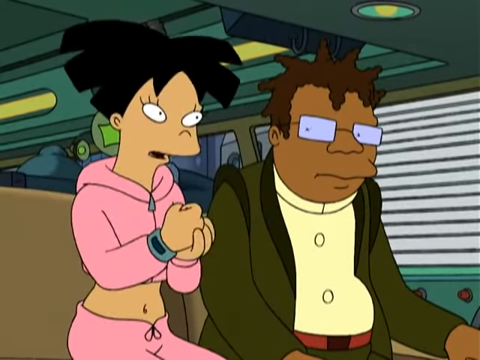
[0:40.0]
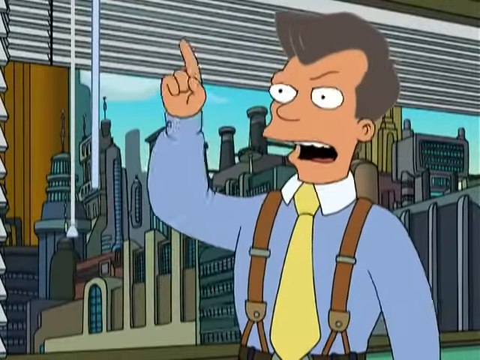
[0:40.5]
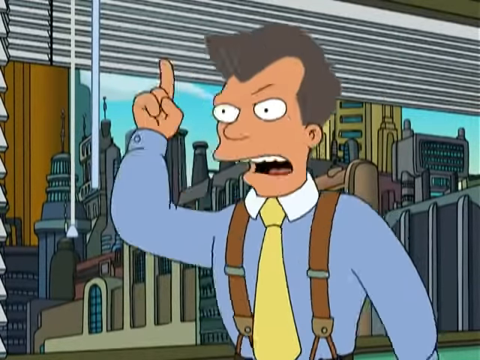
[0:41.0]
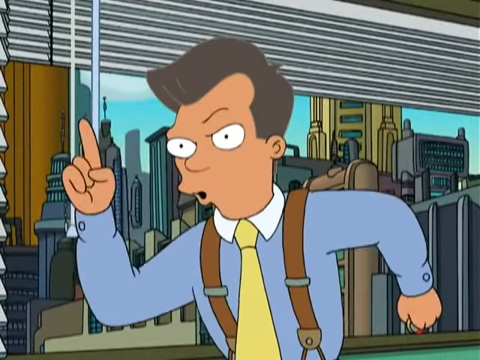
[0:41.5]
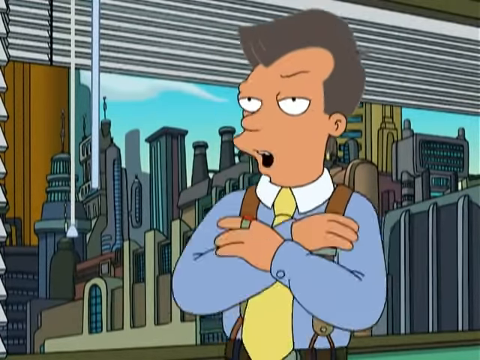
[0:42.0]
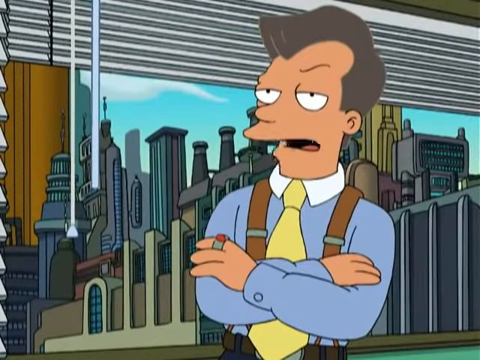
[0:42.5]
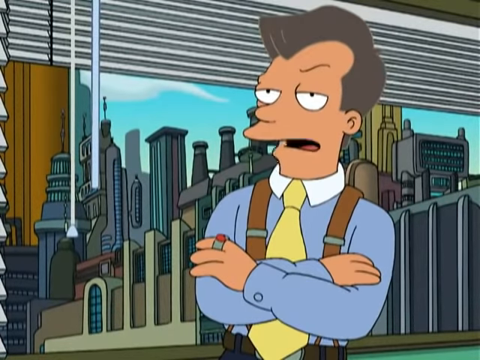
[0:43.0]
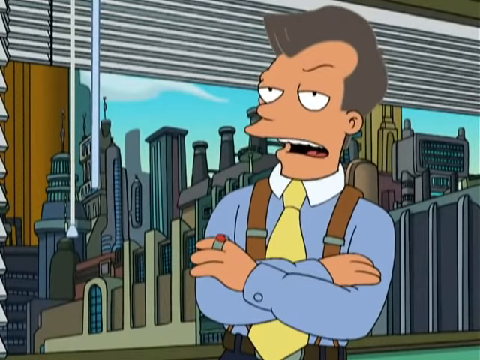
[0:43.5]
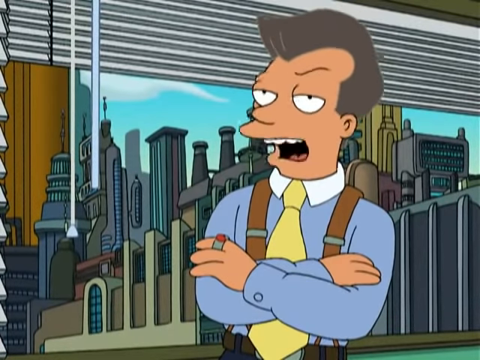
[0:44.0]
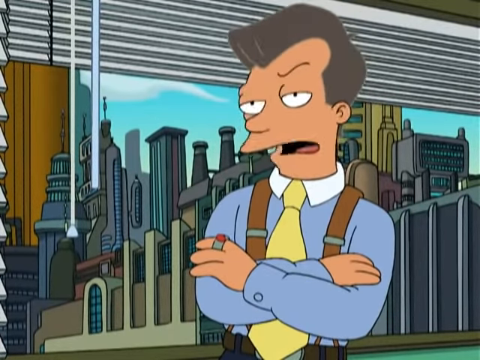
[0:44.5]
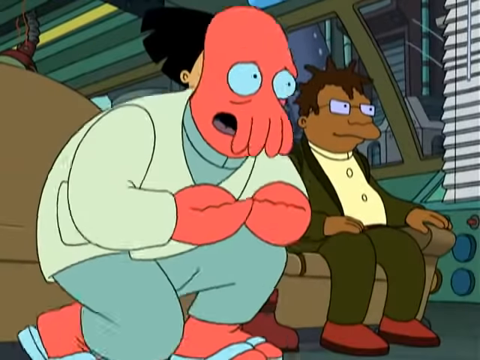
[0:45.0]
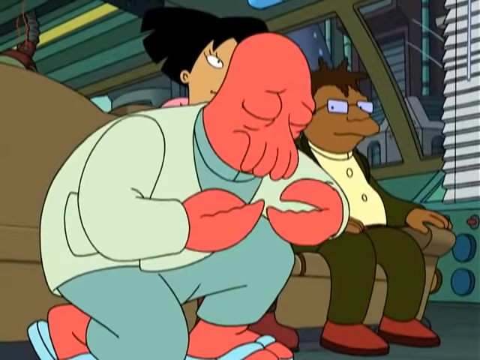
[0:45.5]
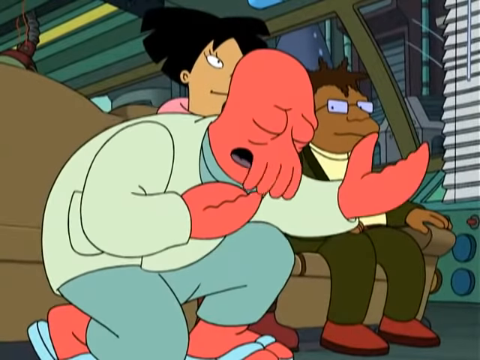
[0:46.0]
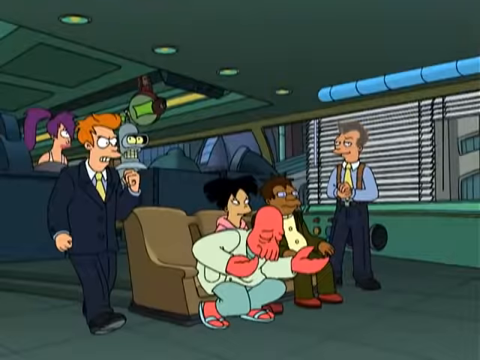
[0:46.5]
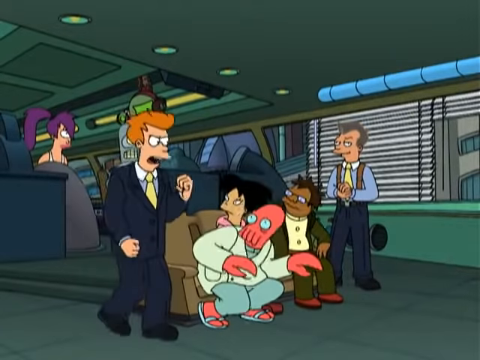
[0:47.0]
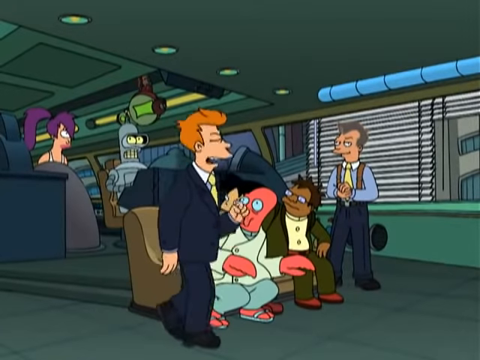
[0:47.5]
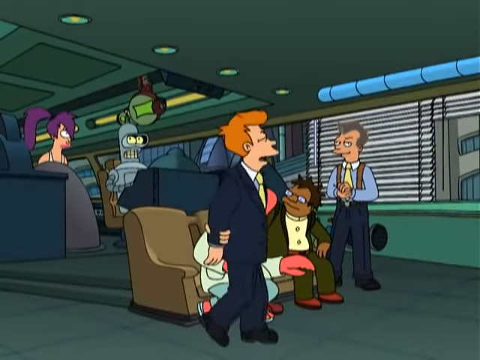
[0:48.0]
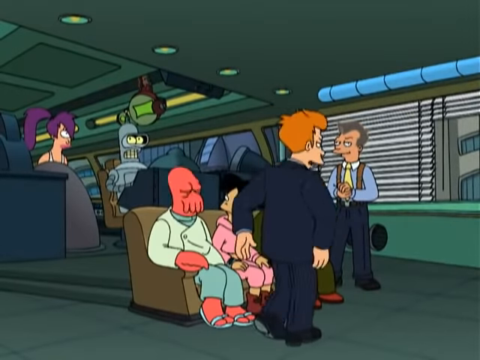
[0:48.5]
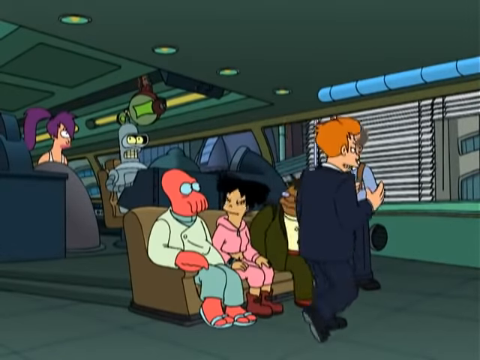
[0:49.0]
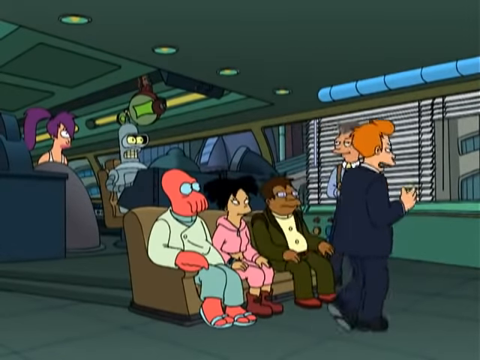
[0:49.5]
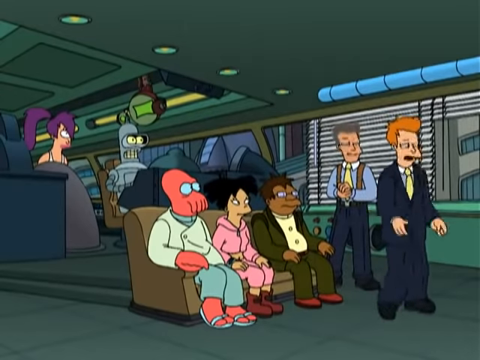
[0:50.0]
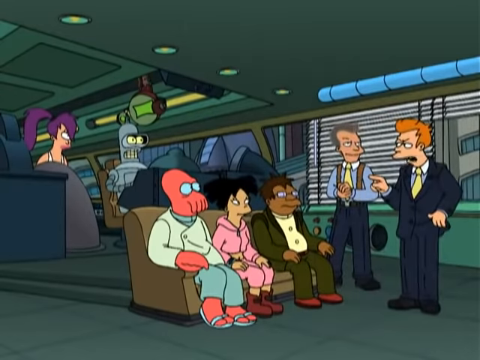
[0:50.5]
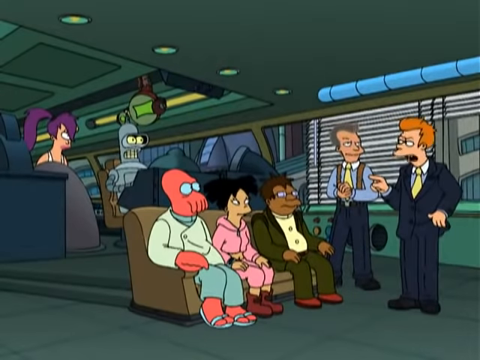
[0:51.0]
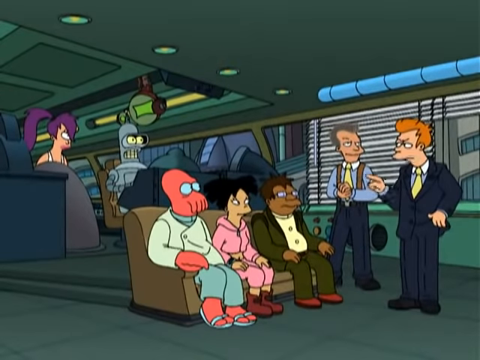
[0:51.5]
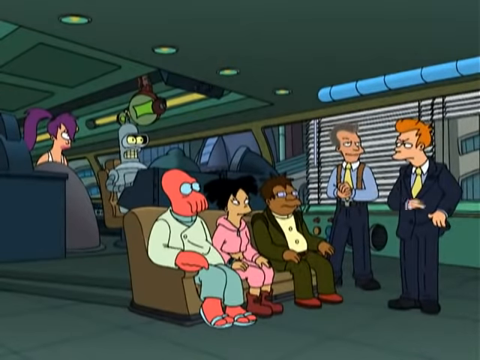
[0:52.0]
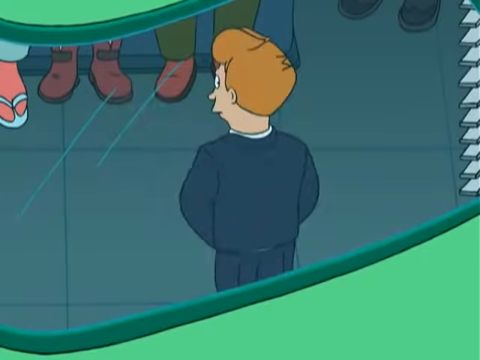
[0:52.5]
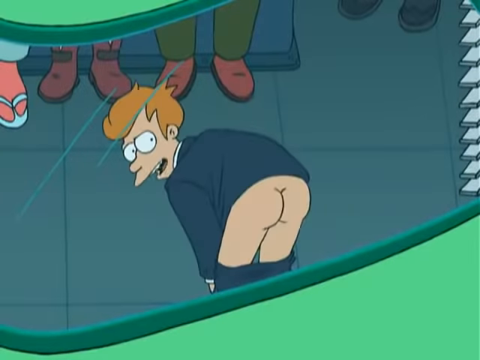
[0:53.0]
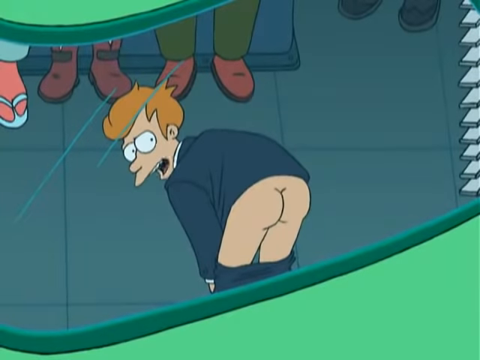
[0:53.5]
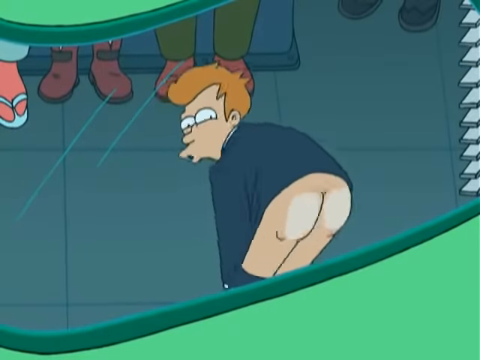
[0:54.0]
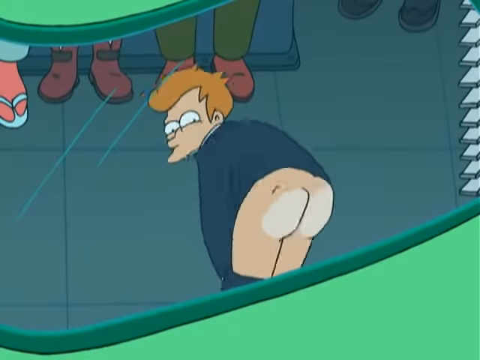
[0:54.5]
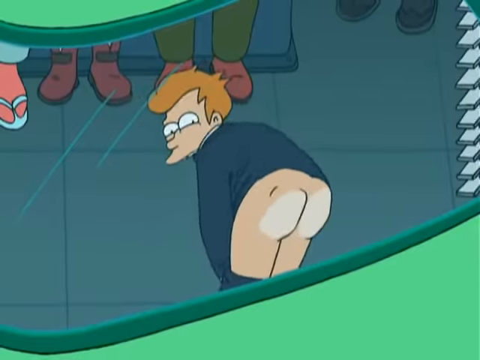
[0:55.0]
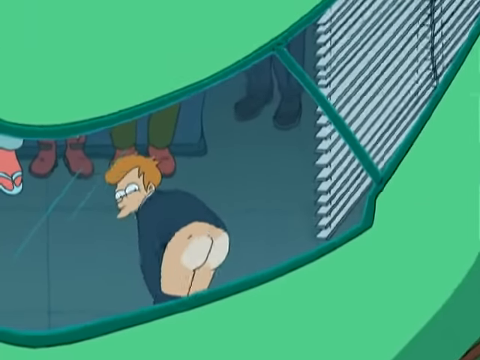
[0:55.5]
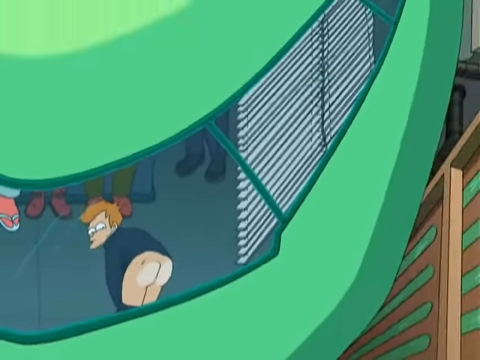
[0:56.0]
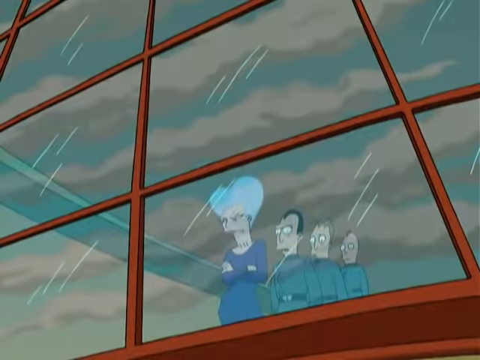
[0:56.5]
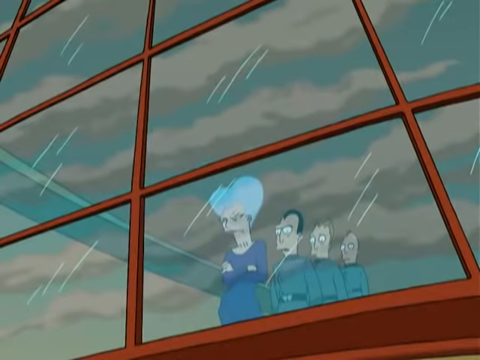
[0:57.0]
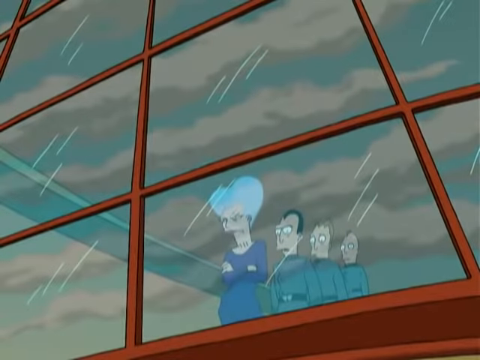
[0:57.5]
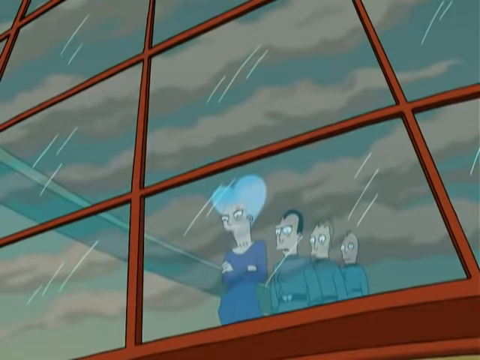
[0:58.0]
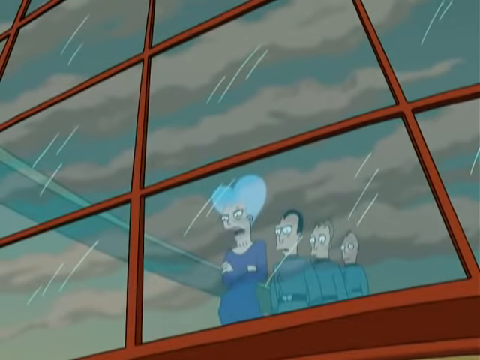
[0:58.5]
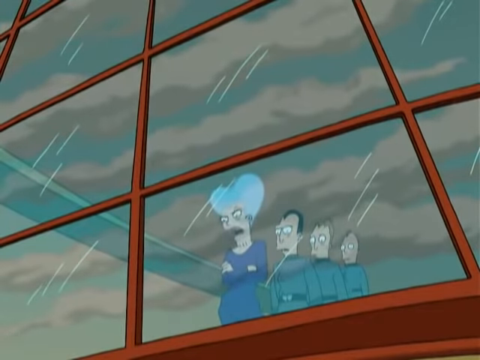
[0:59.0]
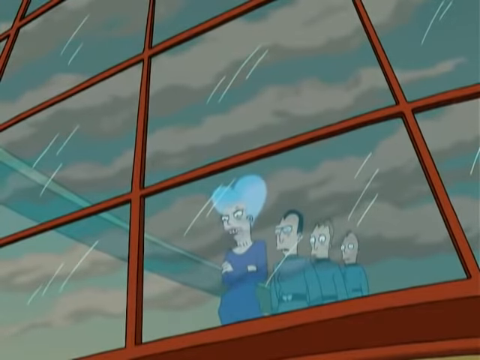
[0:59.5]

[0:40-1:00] A girl in a pink sweatsuit crop top that exposes her belly sits next to a black man with glasses, a green jacket and a yellow shirt. They sit in chairs, listening to a man in a blue dress shirt with brown suspenders who is talking to them. A pink alien-looking figure with tentacles comes and sits next to the two people already seated on the bench. Then another man walks in and interrupts the man in the blue shirt, moves his butt onto the window surface, and rubs it back and forth on the window. The man in the blue shirt looks like he may be upset, and as a lobster man begs for forgiveness, a man in a navy blue suit with red hair moons another group of people standing in another building.